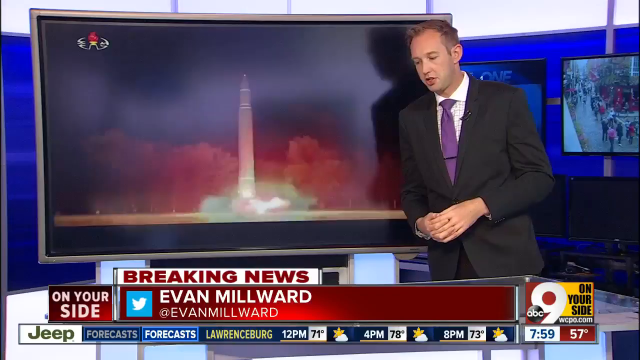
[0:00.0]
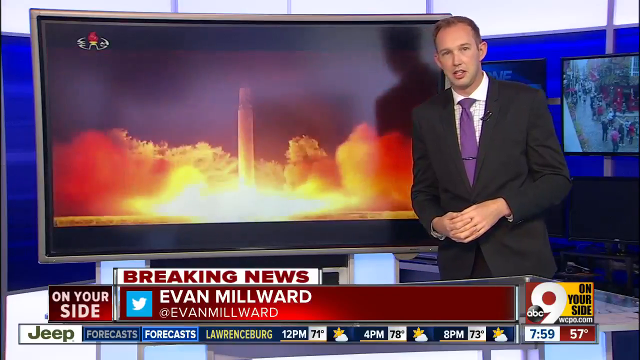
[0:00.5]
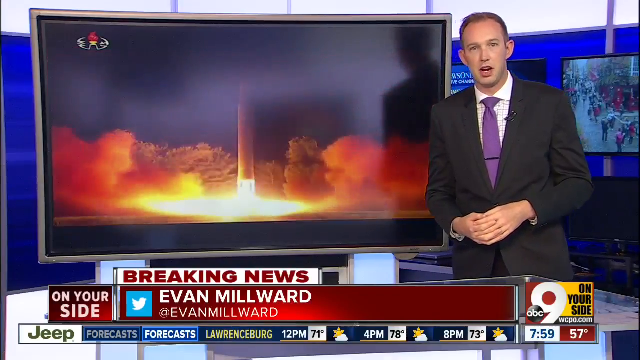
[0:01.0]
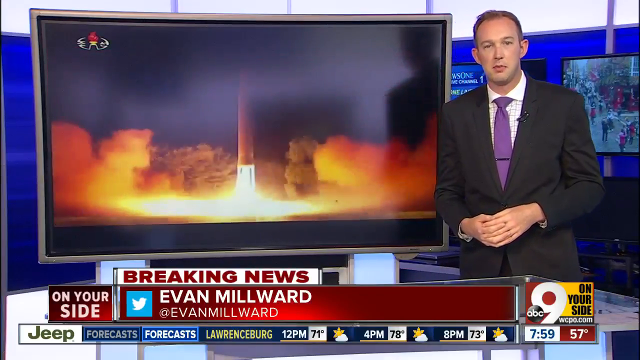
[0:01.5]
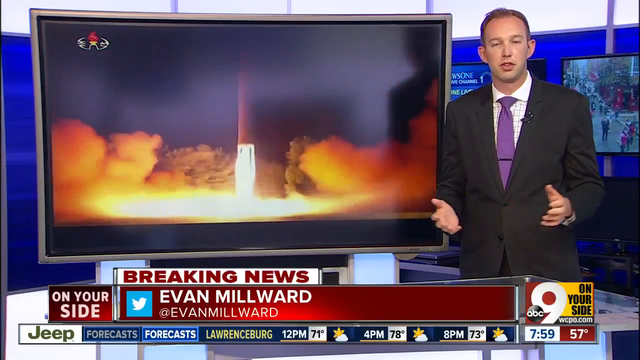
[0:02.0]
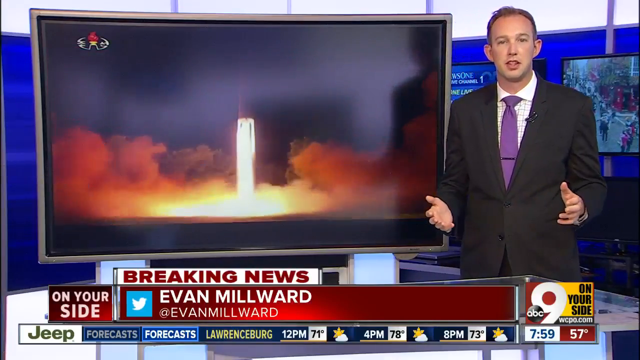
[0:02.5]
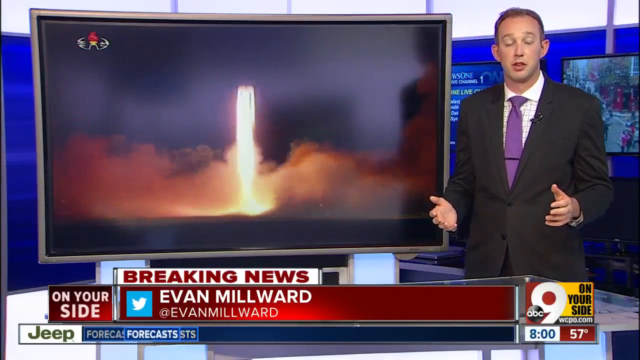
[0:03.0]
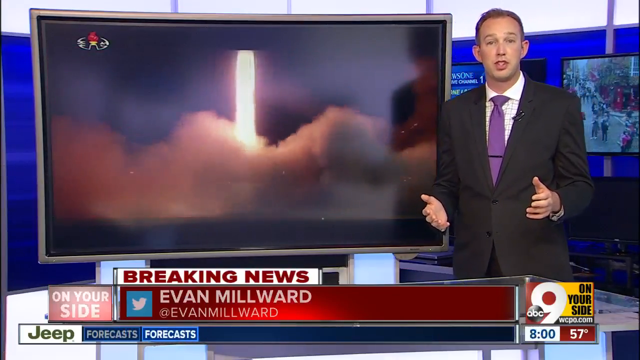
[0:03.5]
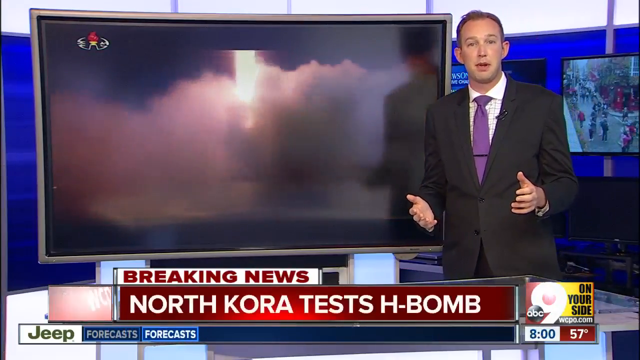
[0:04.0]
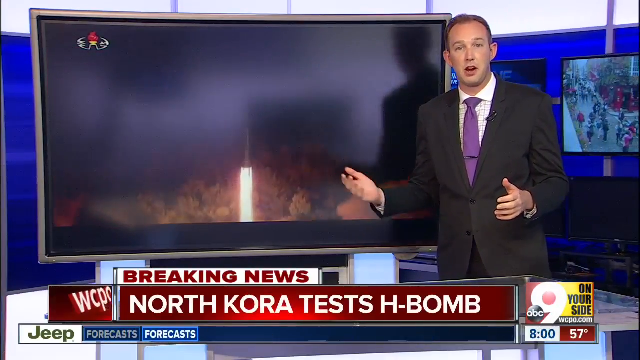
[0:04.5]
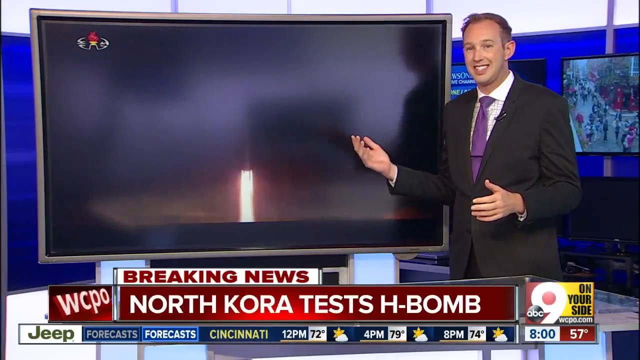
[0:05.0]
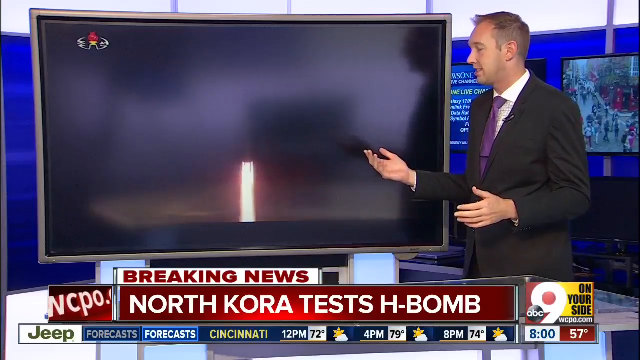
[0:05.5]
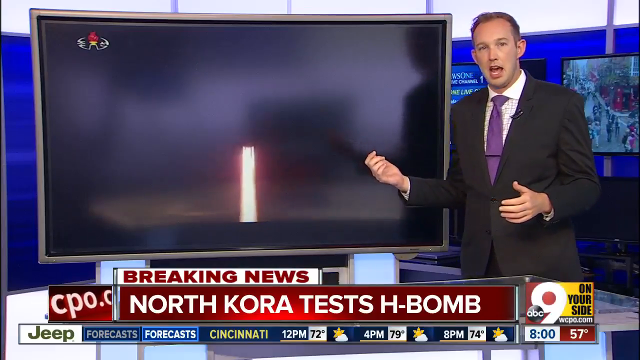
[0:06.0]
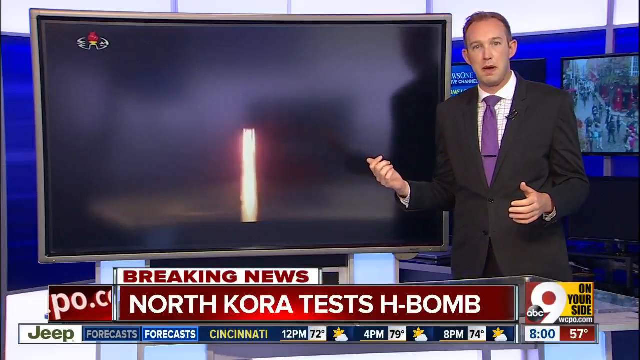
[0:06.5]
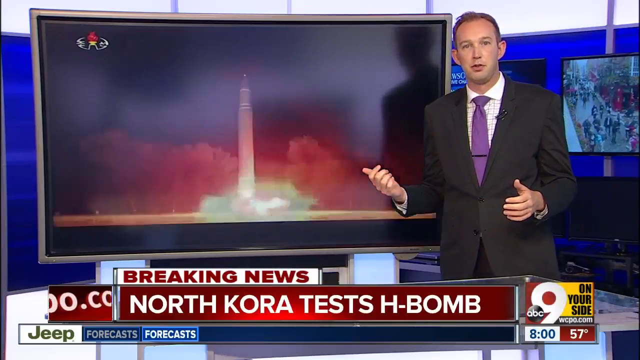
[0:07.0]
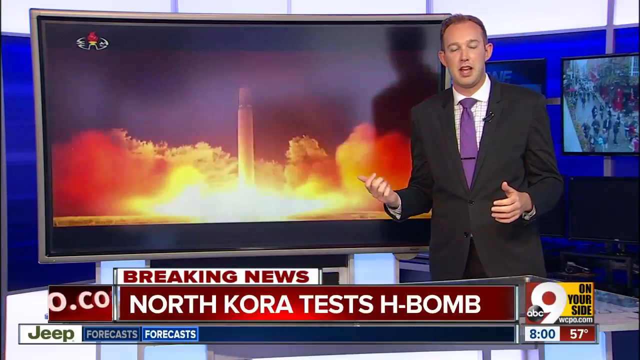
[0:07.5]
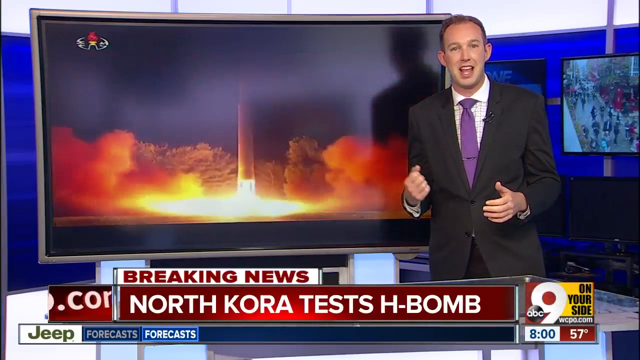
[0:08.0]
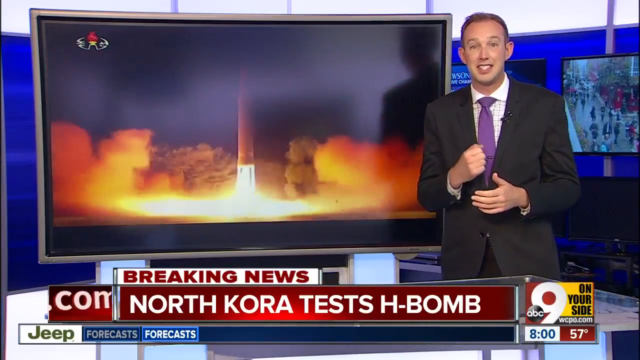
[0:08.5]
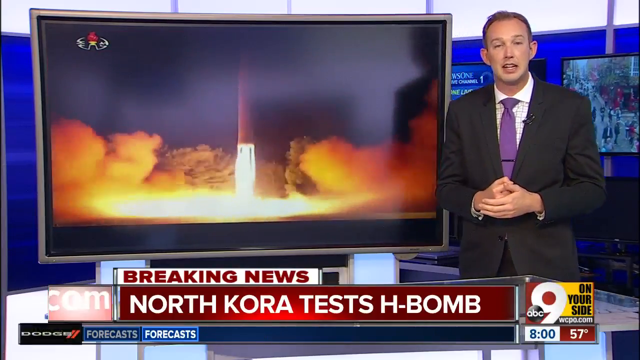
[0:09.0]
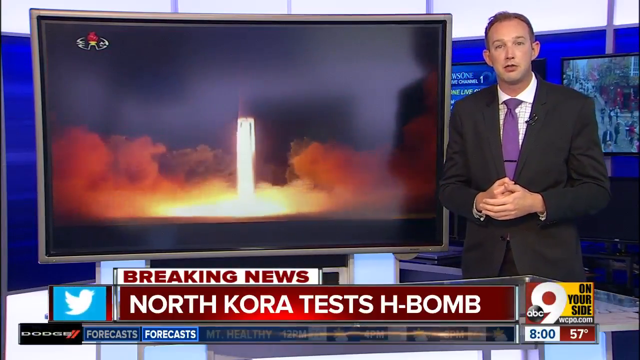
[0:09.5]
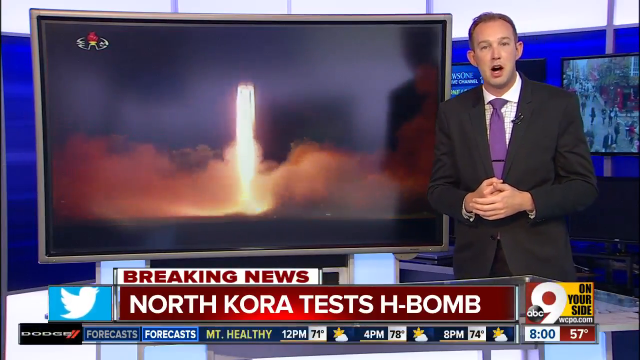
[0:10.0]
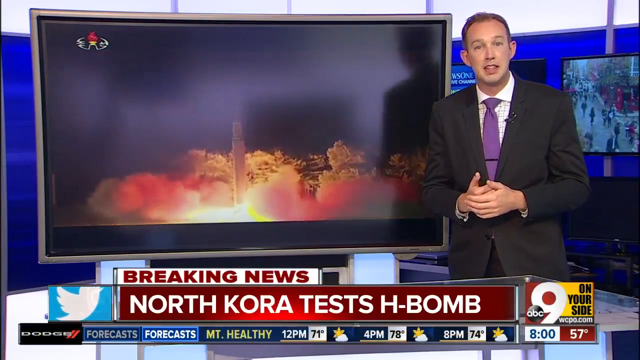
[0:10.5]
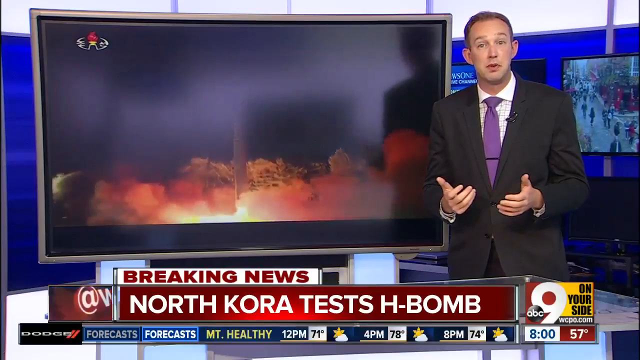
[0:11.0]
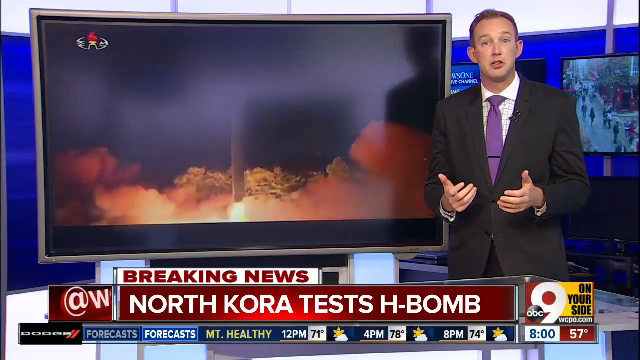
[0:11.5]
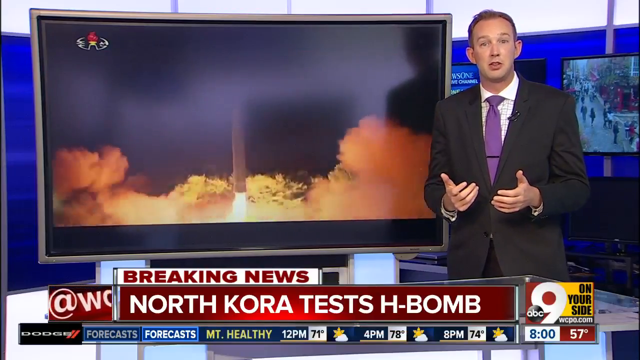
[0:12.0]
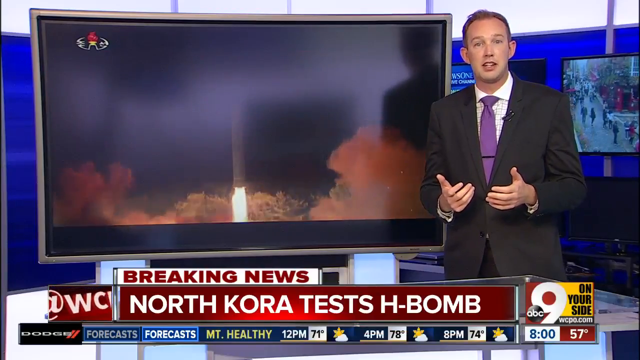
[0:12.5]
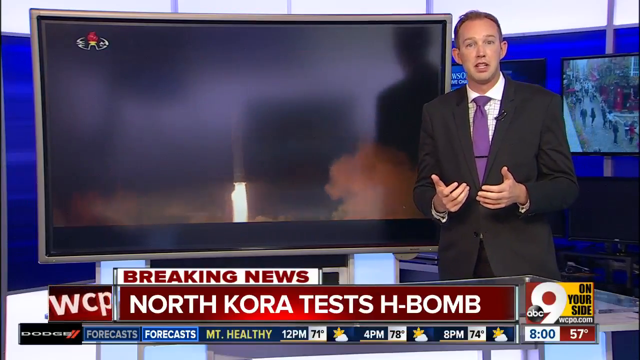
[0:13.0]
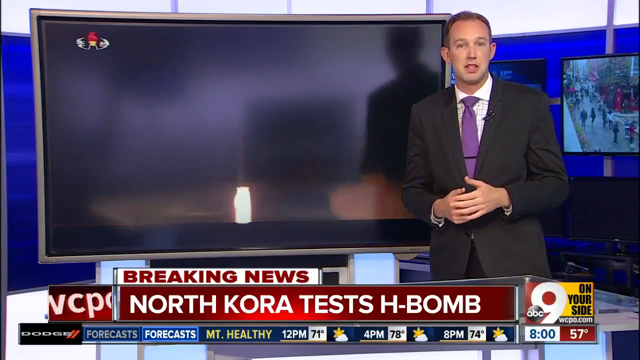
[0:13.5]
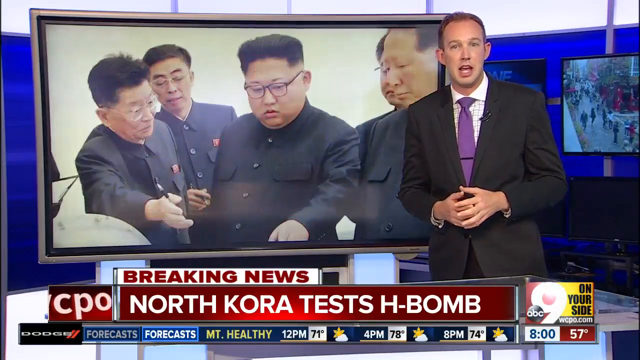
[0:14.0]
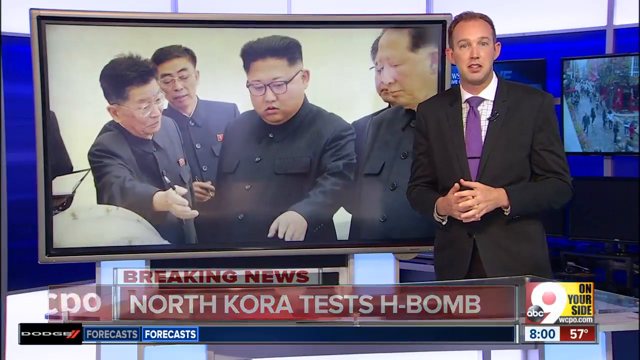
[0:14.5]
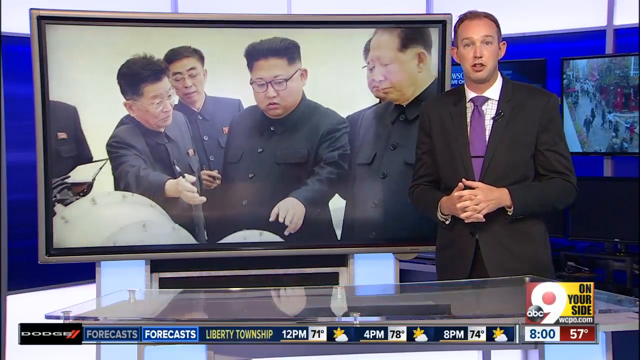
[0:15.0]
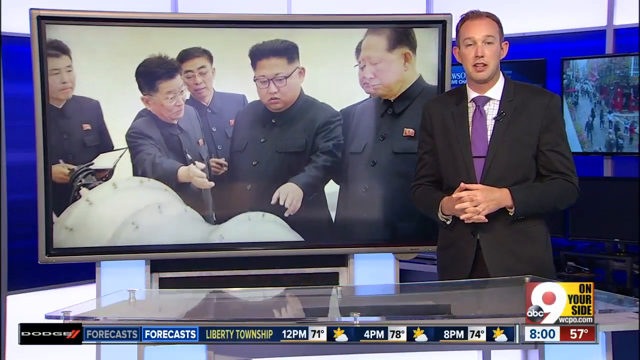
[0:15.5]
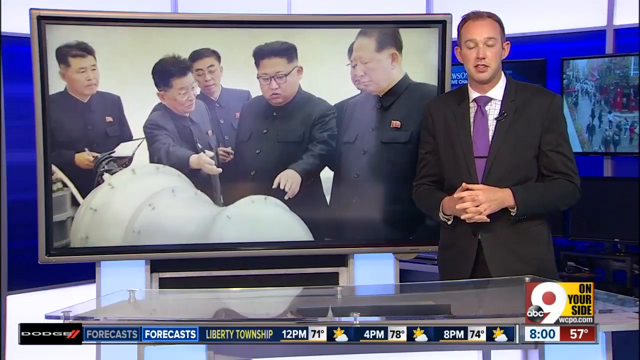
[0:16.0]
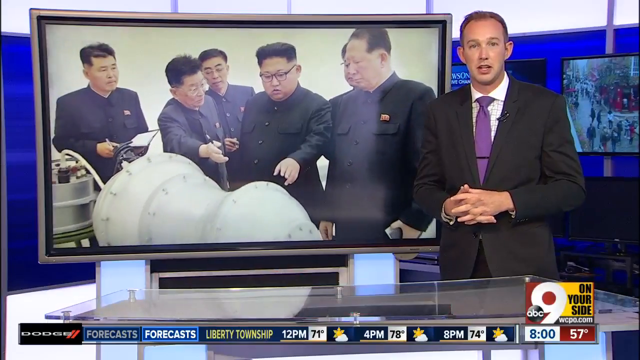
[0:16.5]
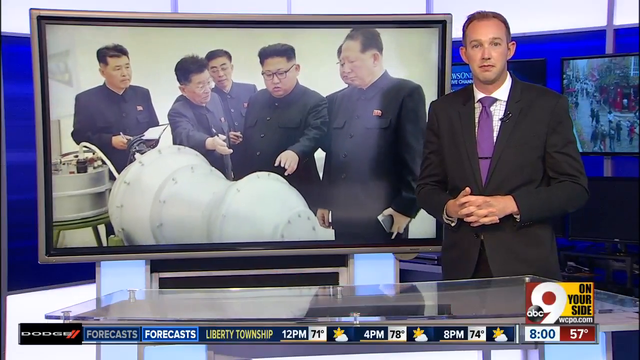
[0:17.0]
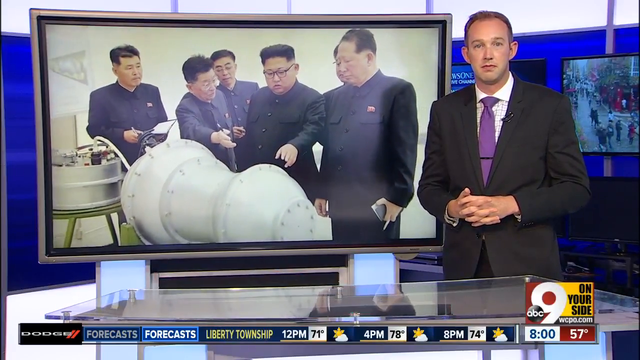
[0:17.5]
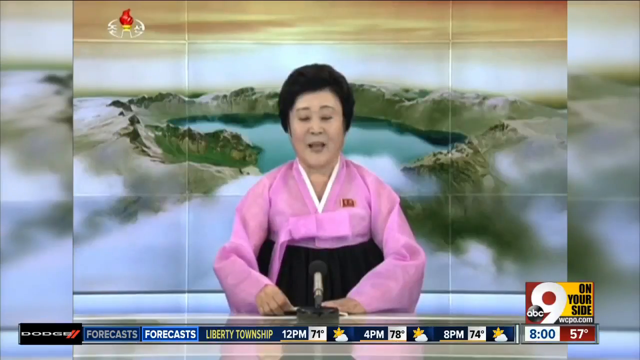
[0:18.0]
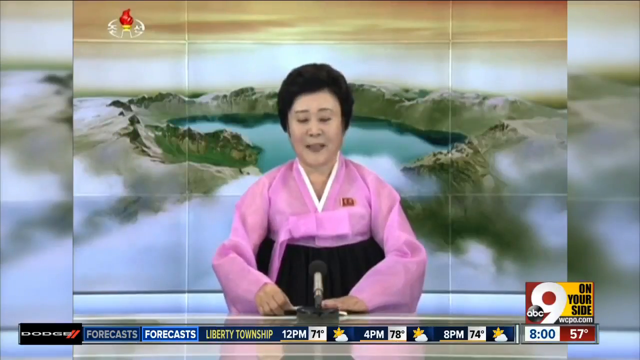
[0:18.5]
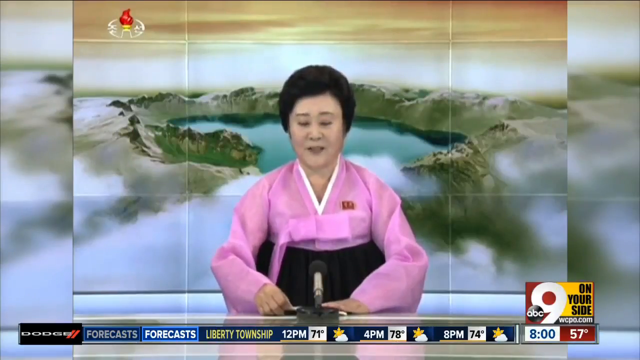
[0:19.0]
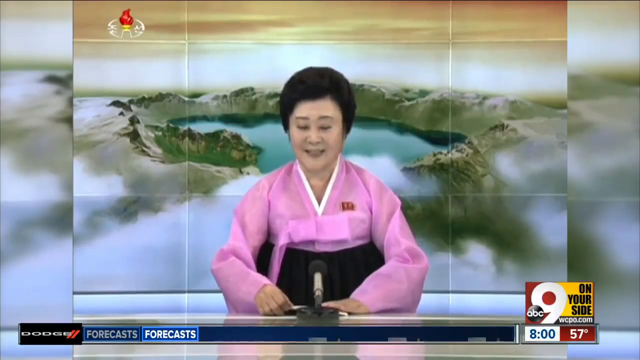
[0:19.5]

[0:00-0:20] A breaking news segment on Channel 9 news is presented by a man named Evan Millard. On-screen text reads "ABC 9 on your side WCPO.com". A man in a black suit with a purple tie, with a microphone clipped to the left lapel of his jacket, holds both hands in front of his stomach with his fingers crossed. Behind him, off to the left, is a curved TV screen showing a rocket launch: a rocket fires up into the sky with a plume of fire and smoke coming out of its bottom. Text reads "breaking news North Cora tests h-bomb", with a typo of "Cora" instead of "Korea". The newsman holds his hands about two feet apart at about waist height, his right hand gesturing at the screen. He turns to the right a little and then back to his left to face the camera, then makes a fist with his right hand and puts it into the palm of his left hand in front of his stomach.